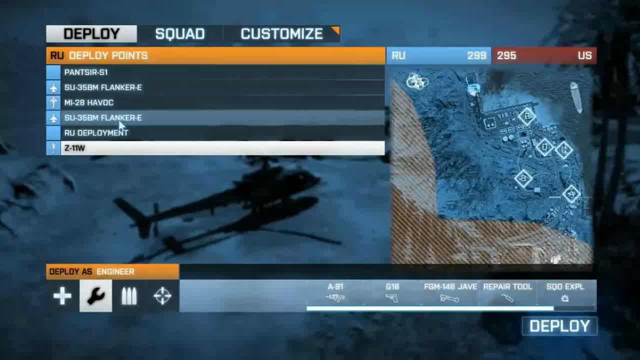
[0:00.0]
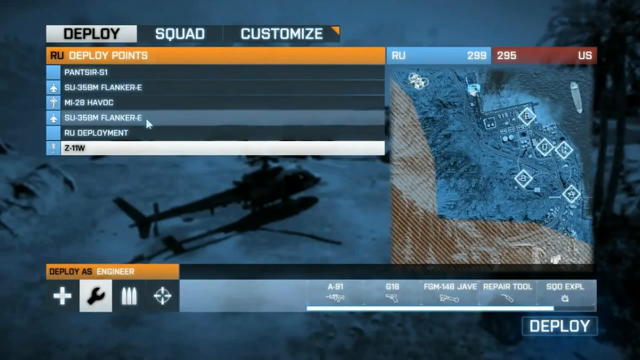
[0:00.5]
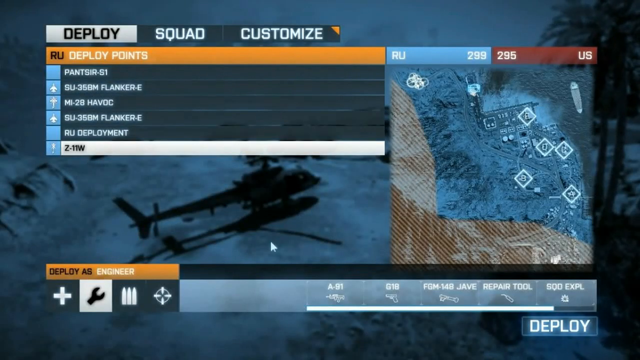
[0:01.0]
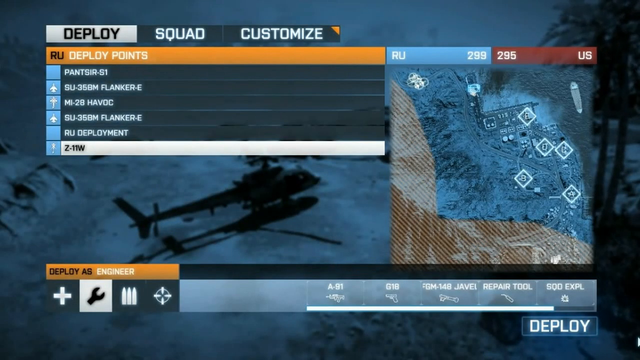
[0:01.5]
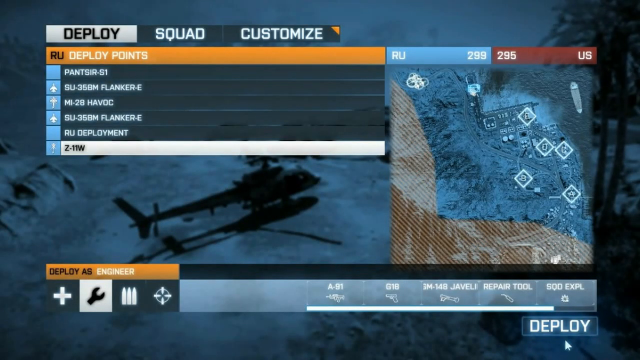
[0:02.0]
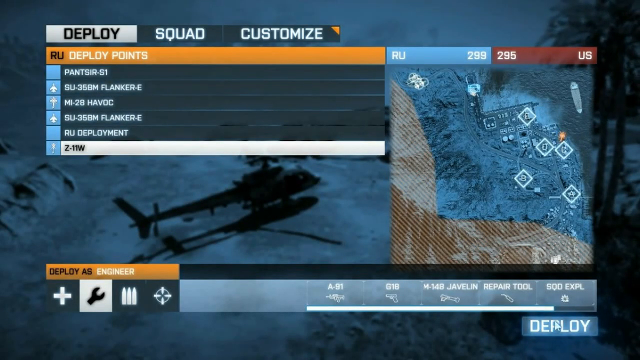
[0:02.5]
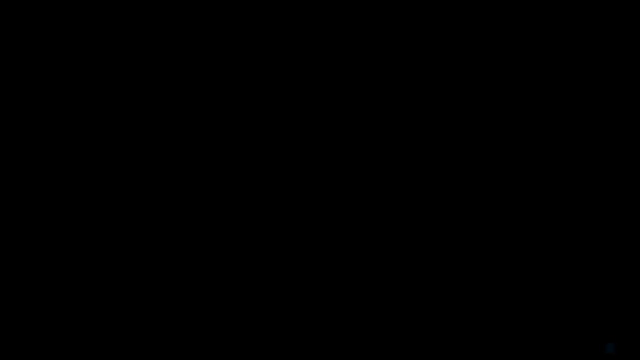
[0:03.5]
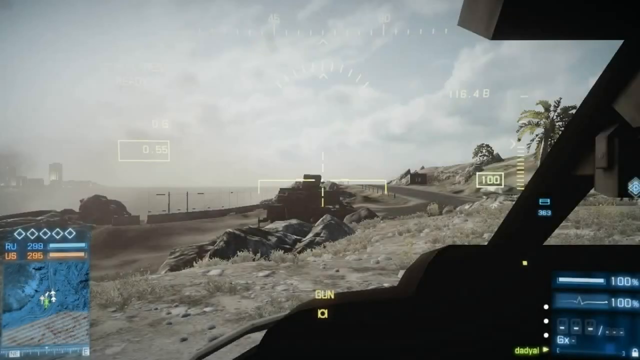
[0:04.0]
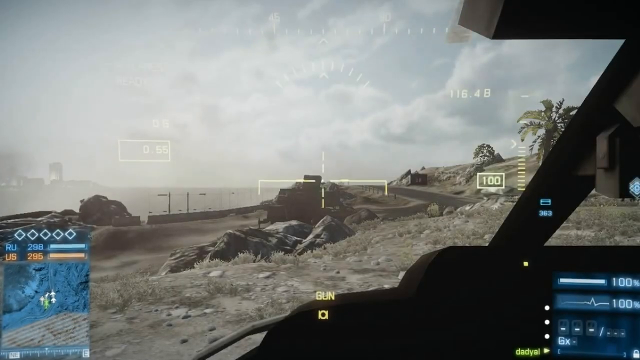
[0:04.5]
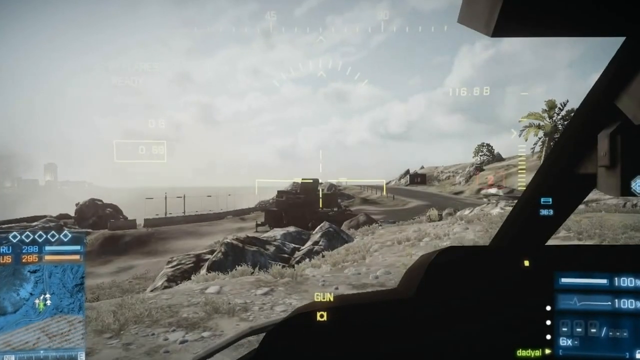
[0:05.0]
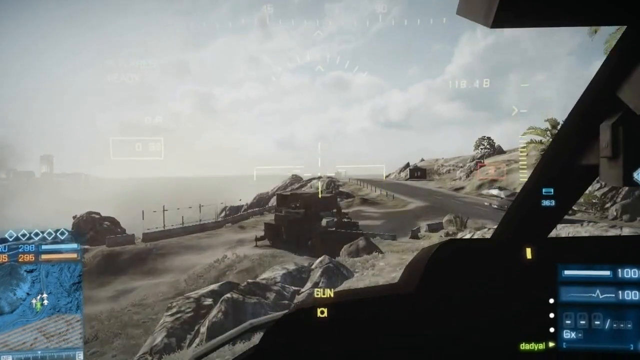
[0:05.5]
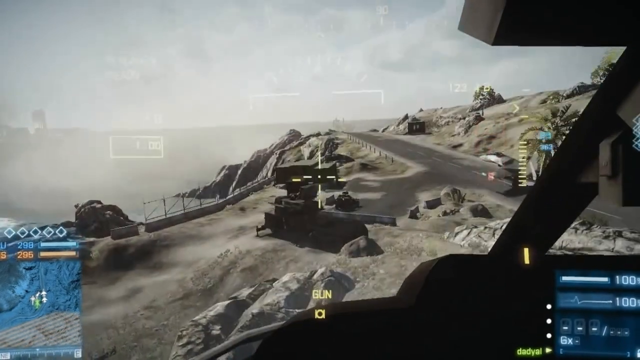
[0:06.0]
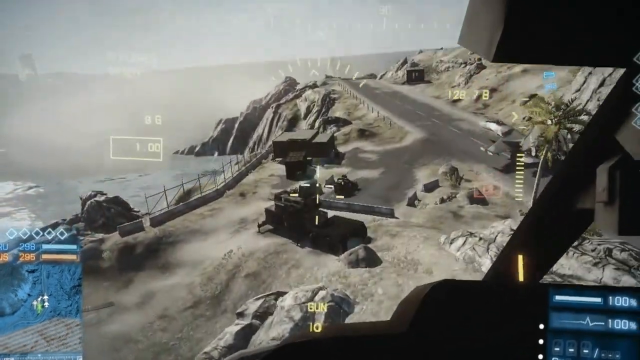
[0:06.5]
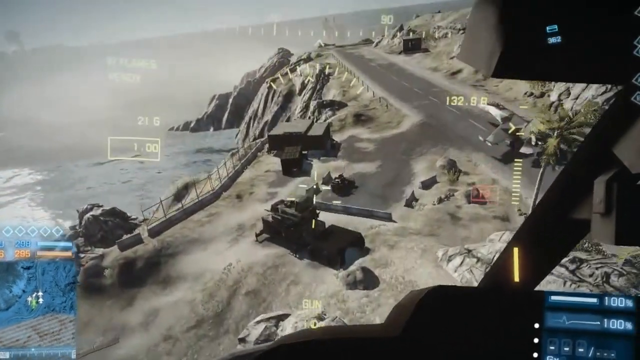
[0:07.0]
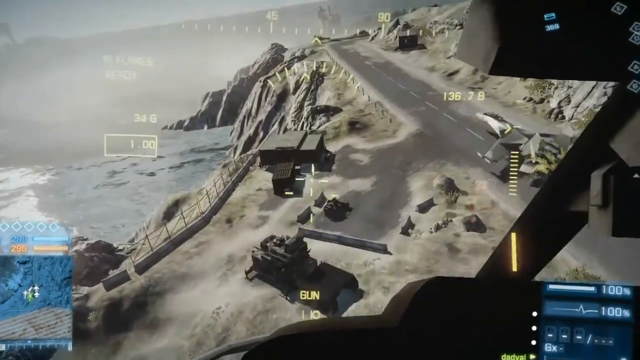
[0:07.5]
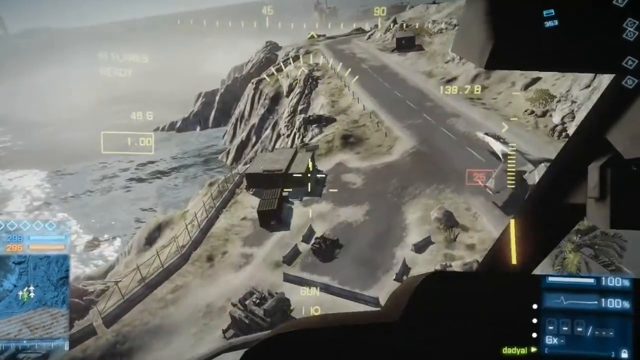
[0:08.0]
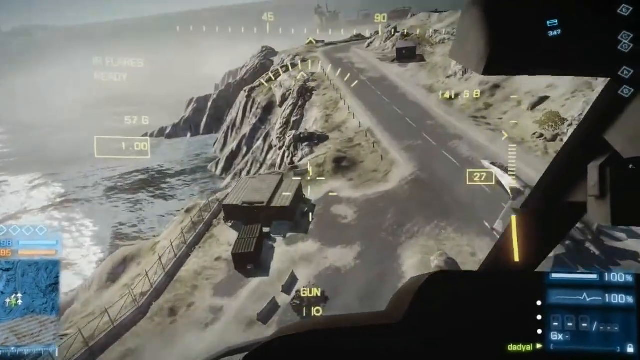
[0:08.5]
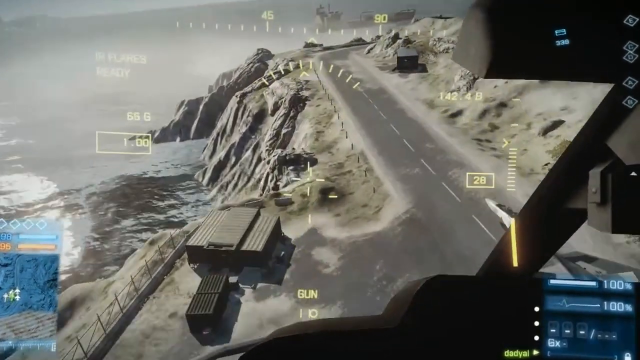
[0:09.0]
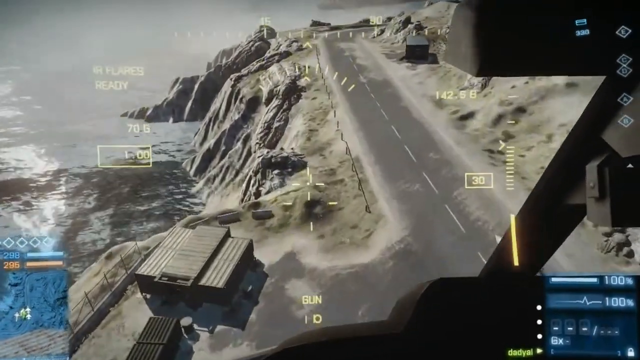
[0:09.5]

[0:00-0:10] A video game begins with a menu on a light blue background, through which the user goes over some options before the game starts. It then switches quickly to the gameplay, a first-person shooter. The player is in some sort of aircraft, and the first-person view elevates upward as it rises. Two crosses in the center of the screen serve as targets to shoot at. A map is in the bottom left corner. The scenery is very light gray and looks like some sort of desert, with a couple of buildings visible. The player advances forward, searching.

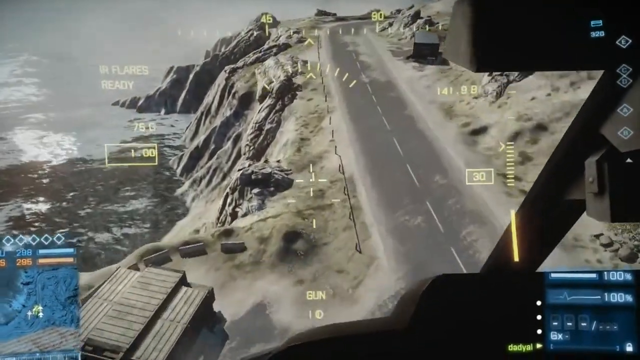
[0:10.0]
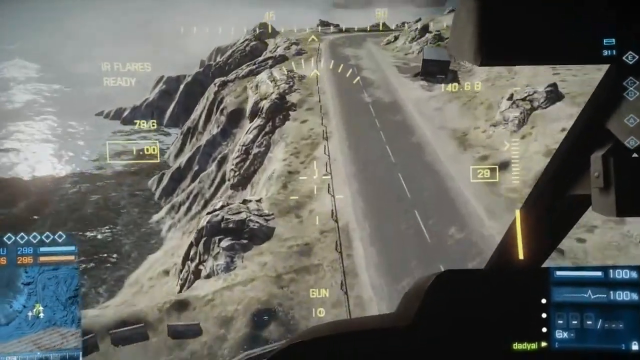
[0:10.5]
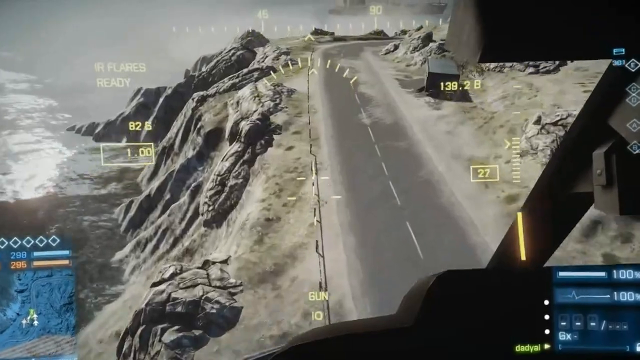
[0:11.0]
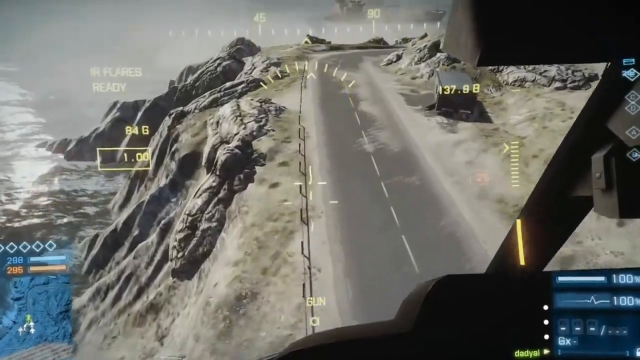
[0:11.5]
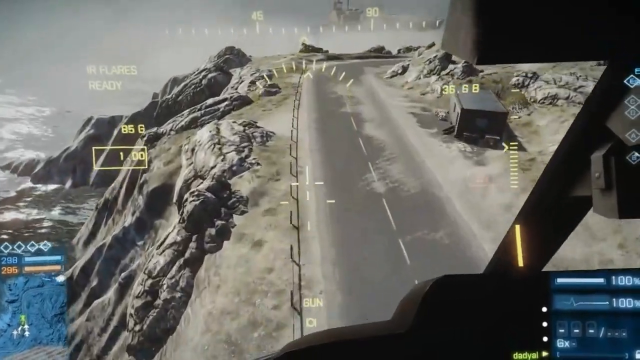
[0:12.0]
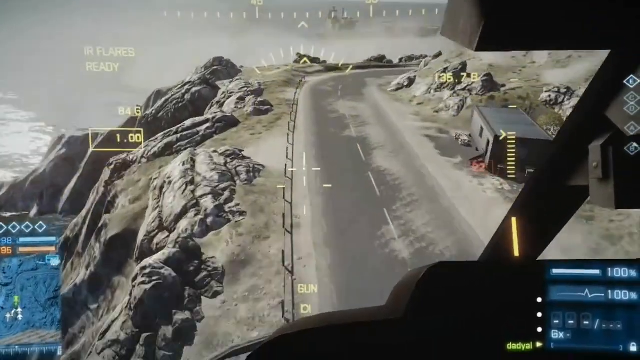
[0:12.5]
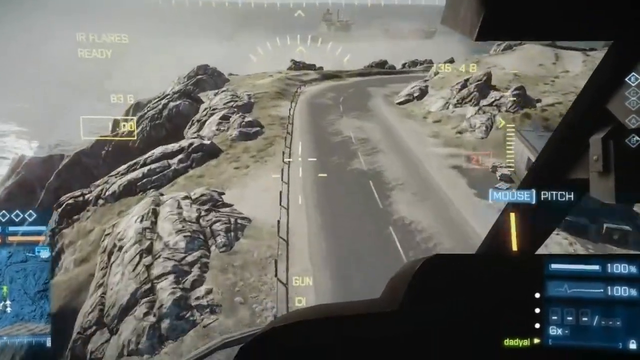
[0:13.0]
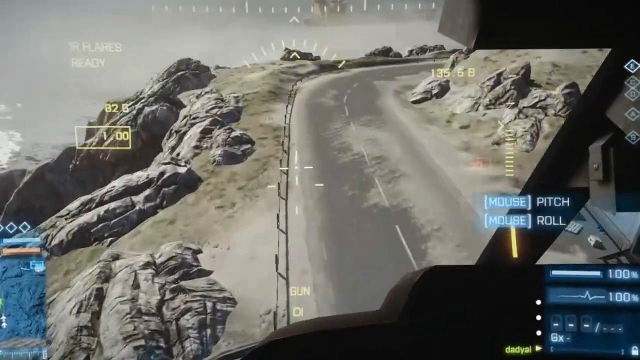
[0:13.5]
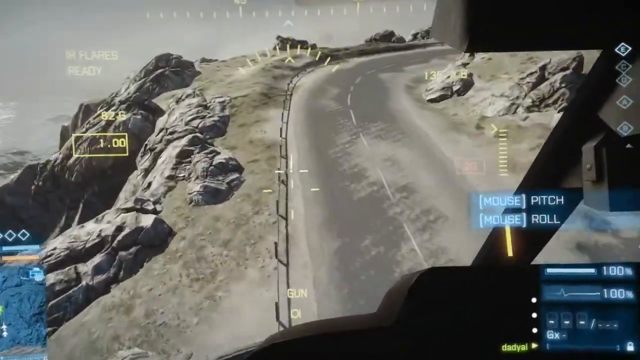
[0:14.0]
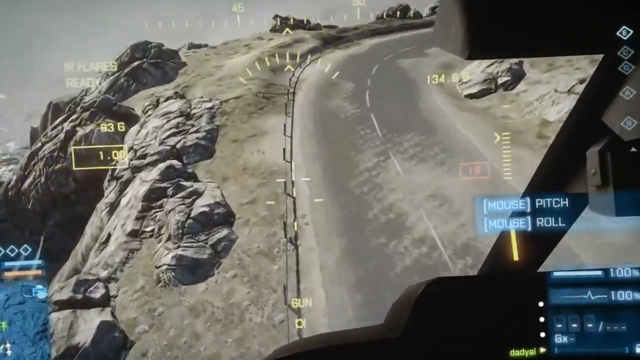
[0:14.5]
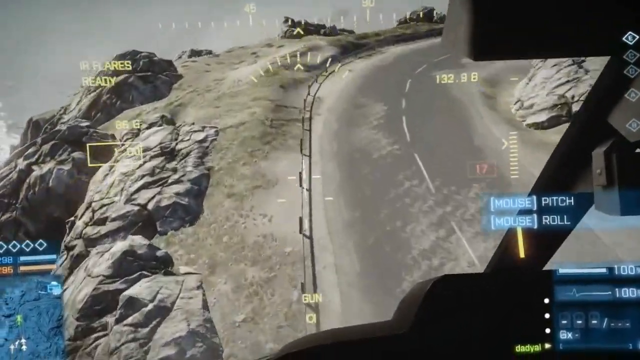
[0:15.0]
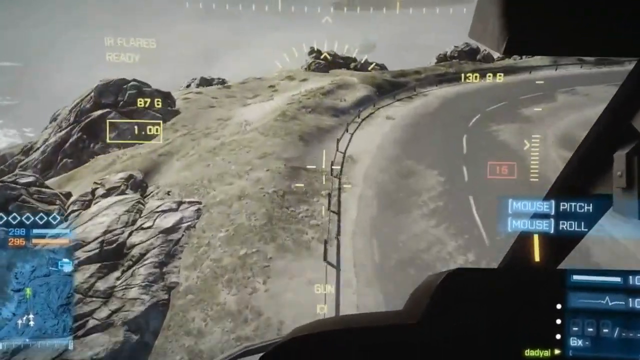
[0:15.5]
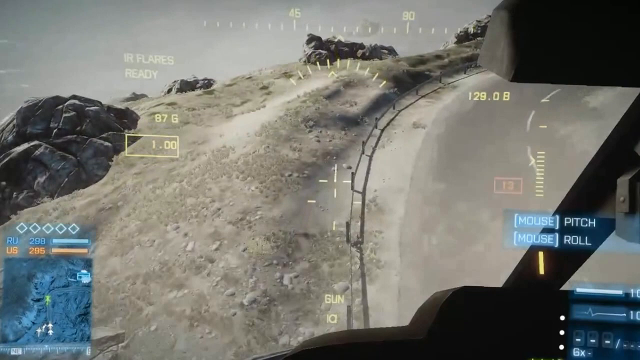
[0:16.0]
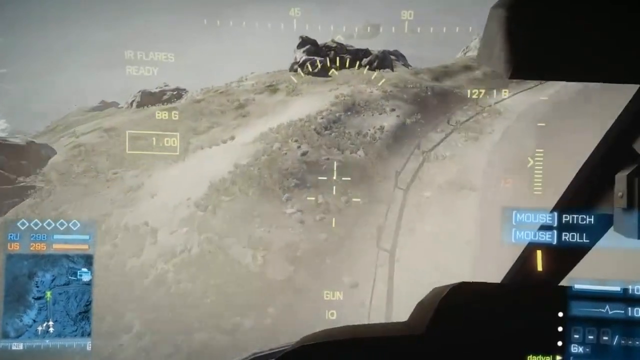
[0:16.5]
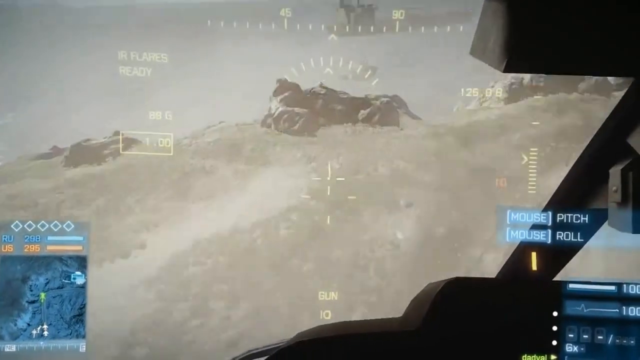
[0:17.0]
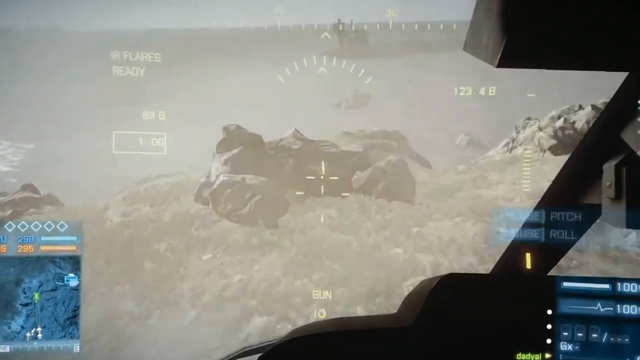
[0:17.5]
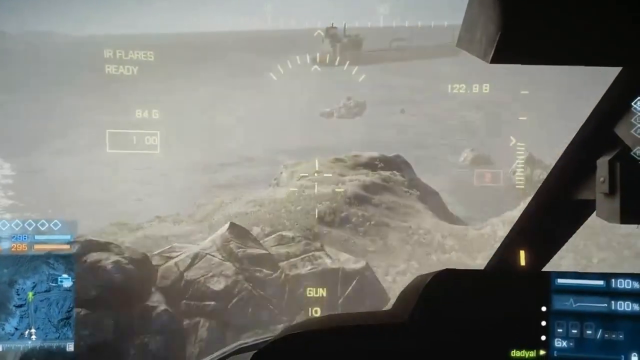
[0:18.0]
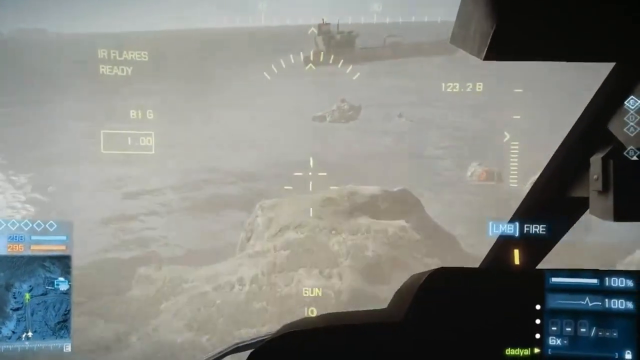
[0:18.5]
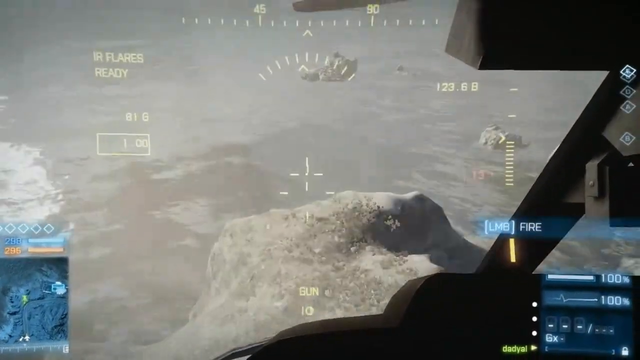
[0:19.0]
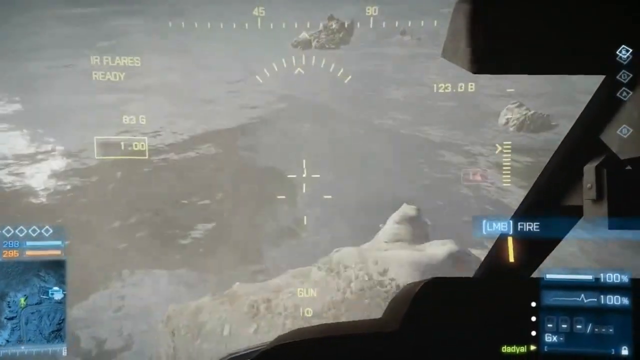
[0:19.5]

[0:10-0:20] The aircraft continues to move forward. In the center there is an empty road, and to the left are a bunch of big, giant rocks and stones and a cliff. The aircraft passes the road and the cliff, and a large amount of water comes into view. The road curves to the right side. The aircraft keeps progressing forward, then goes off the edge of the cliff and is flying in the air over a great deal of water, like an ocean.